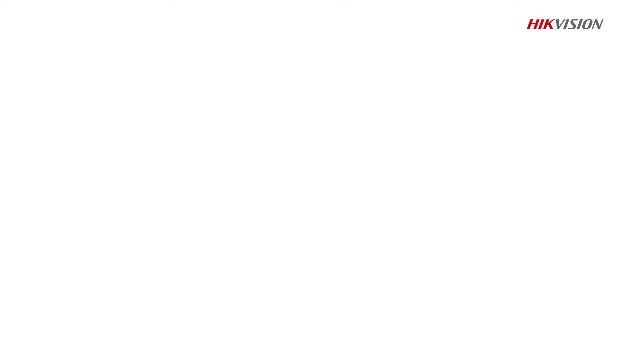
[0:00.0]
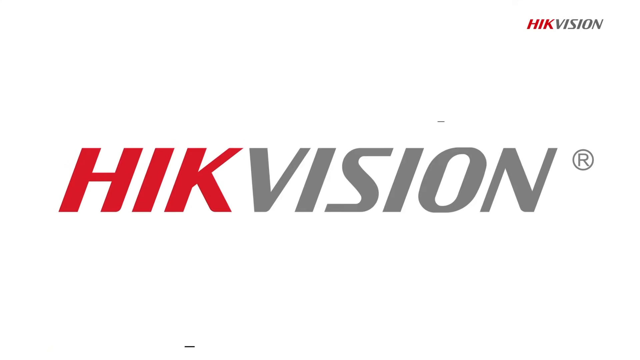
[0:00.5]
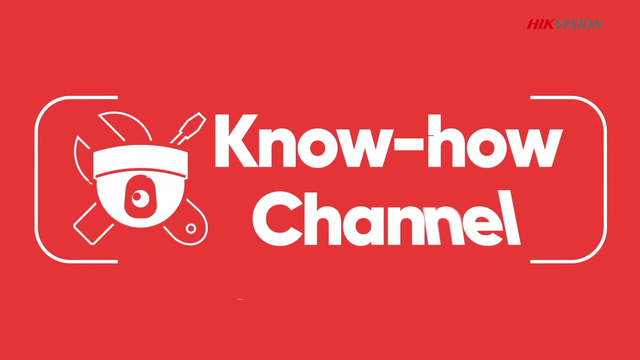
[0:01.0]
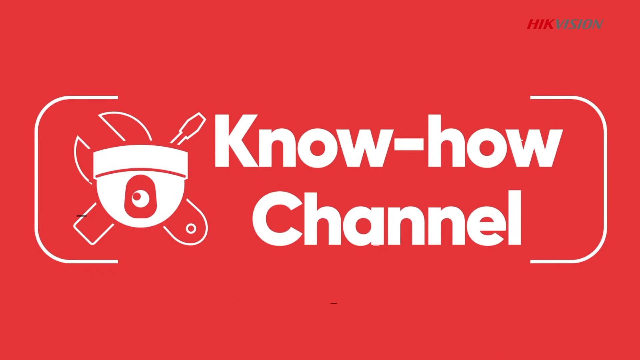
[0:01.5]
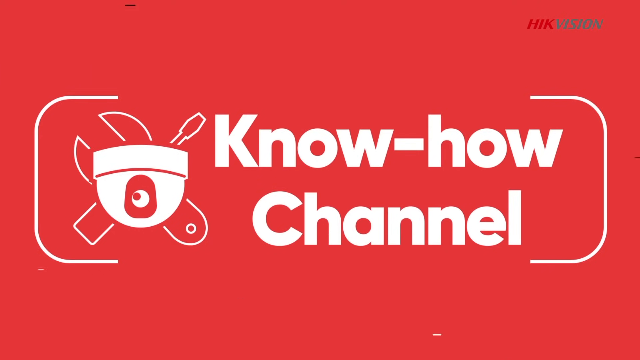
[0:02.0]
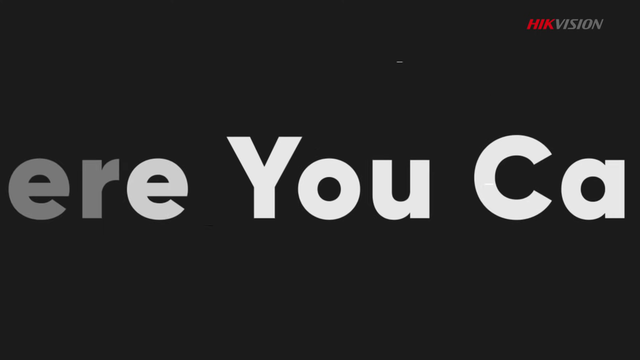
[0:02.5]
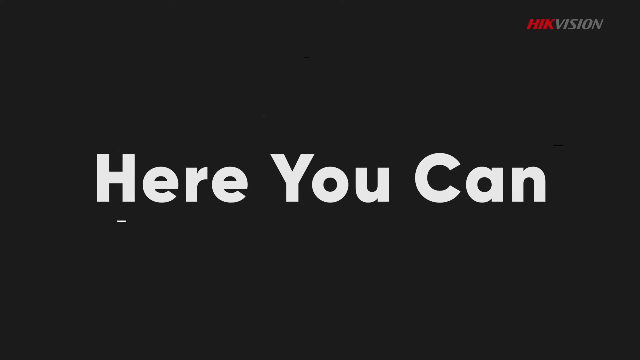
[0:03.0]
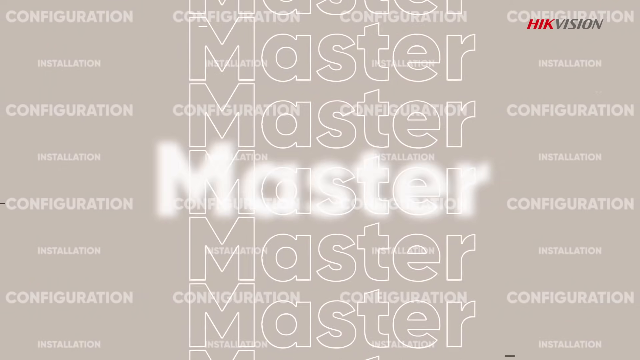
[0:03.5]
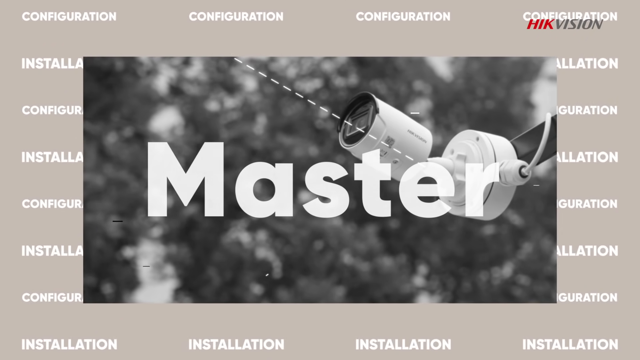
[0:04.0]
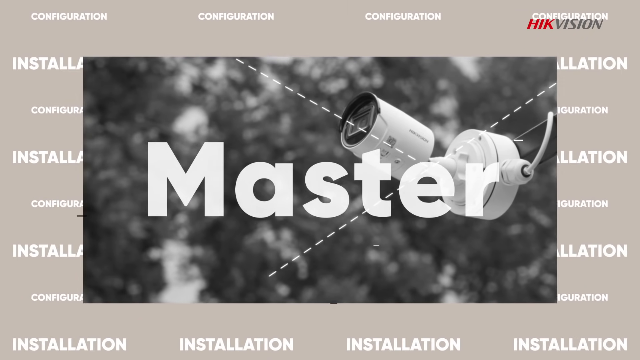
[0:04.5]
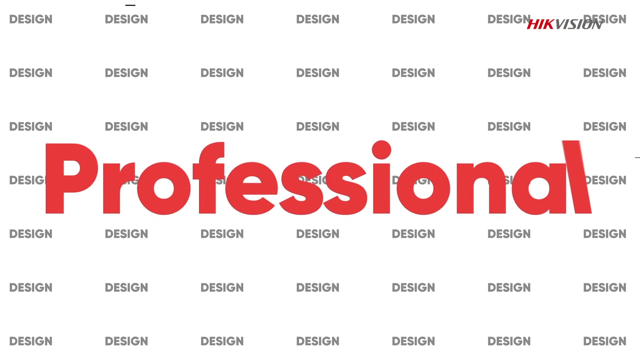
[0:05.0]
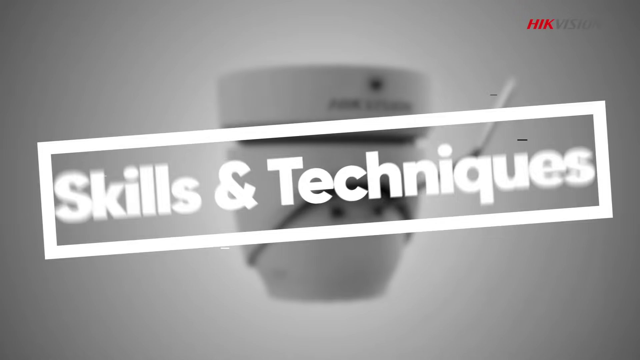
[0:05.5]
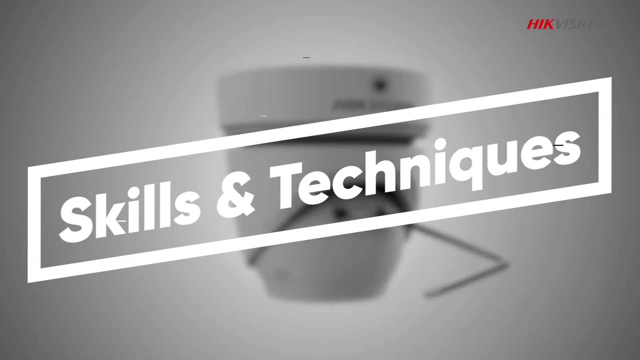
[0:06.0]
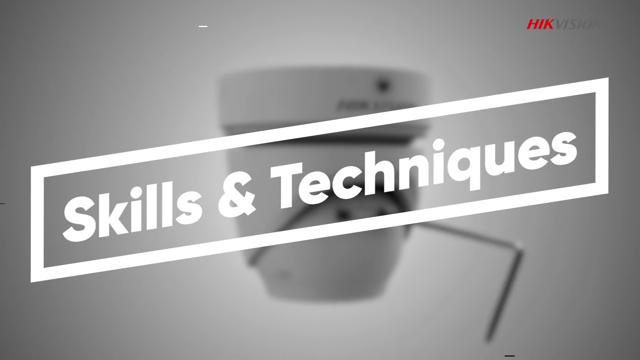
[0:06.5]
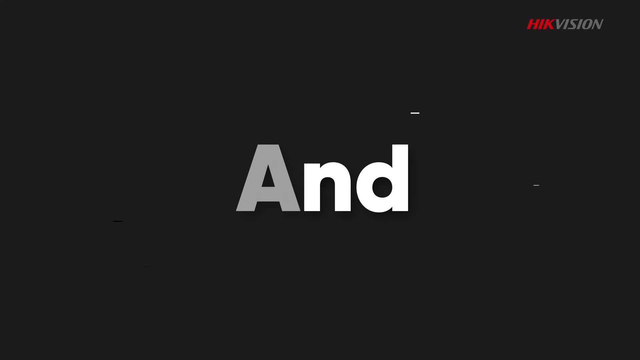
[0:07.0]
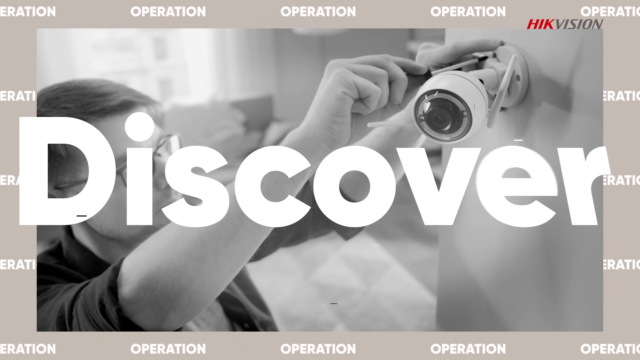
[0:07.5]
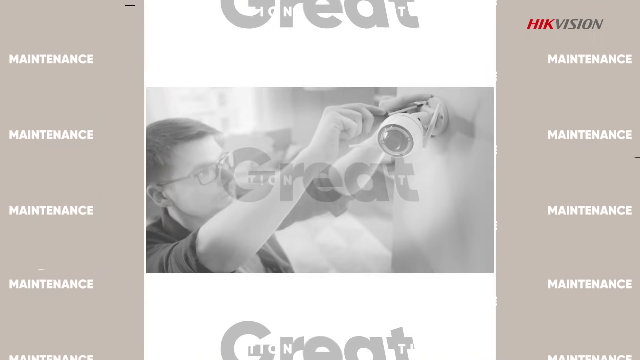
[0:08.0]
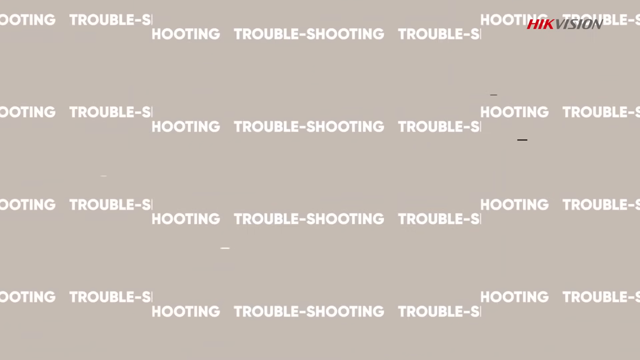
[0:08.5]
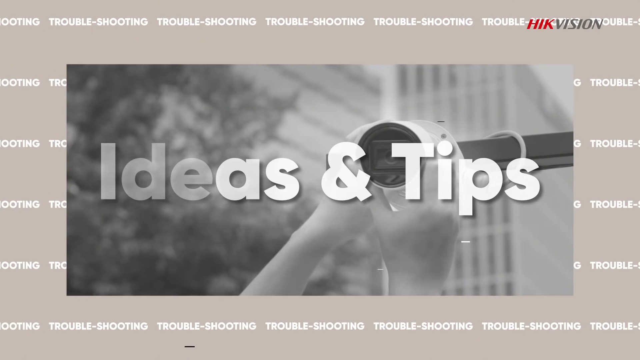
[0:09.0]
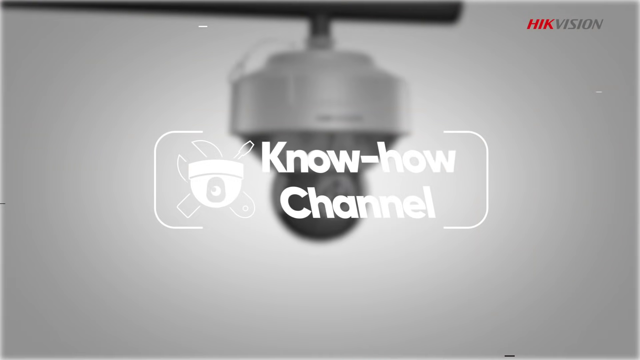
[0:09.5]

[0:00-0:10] The video opens on a channel that says "HIK Vision," and then "know-how channel," shown with what looks like a surveillance camera and some tools around it. The text continues screen by screen: "here you can," then "master," again with a security camera behind it, then "professional," "skills and techniques," and "discover great ideas and tips," followed by "know-how channel." Each of these is thrown across the screen in a different look. "Ideas and tips" is written in white over a black and white image of a person putting up a security camera, and behind that the word "troubleshooting" appears. The know-how channel text appears again, with a blurred black and white security camera in the background.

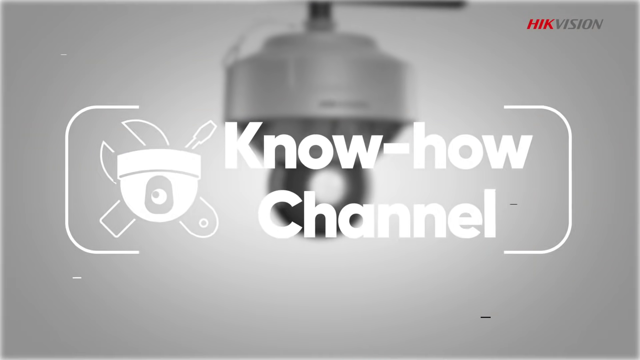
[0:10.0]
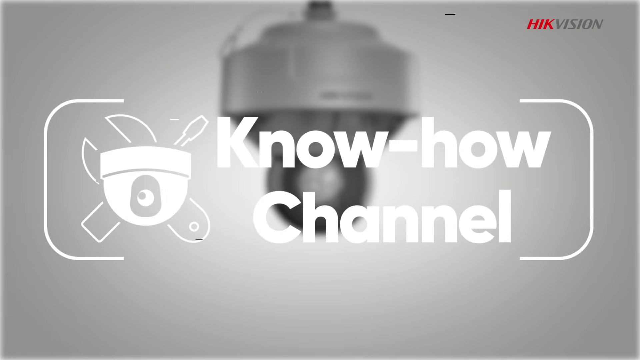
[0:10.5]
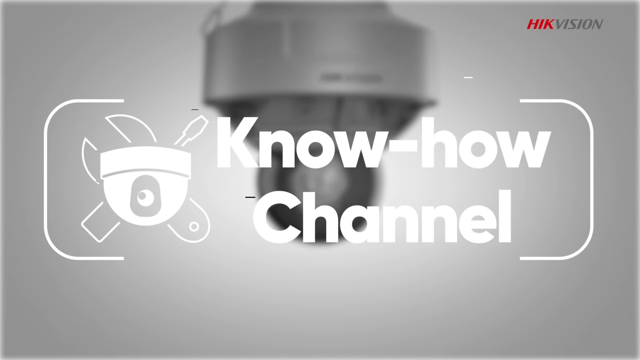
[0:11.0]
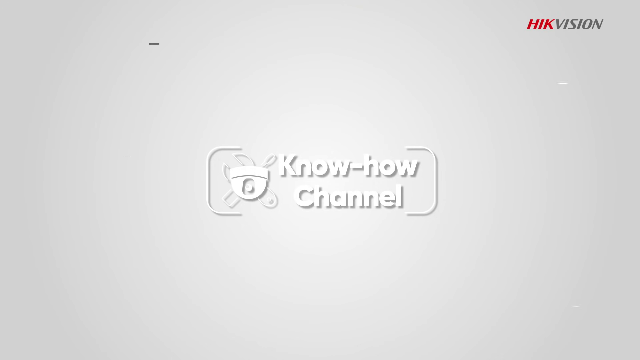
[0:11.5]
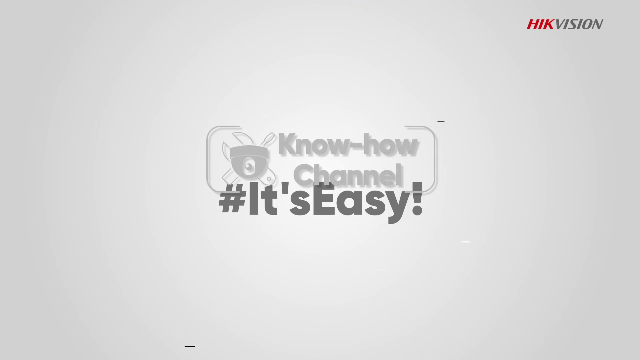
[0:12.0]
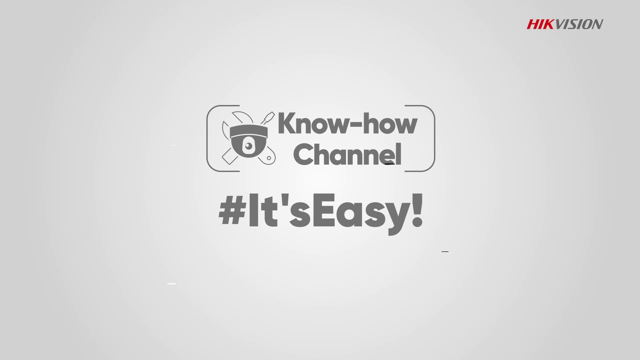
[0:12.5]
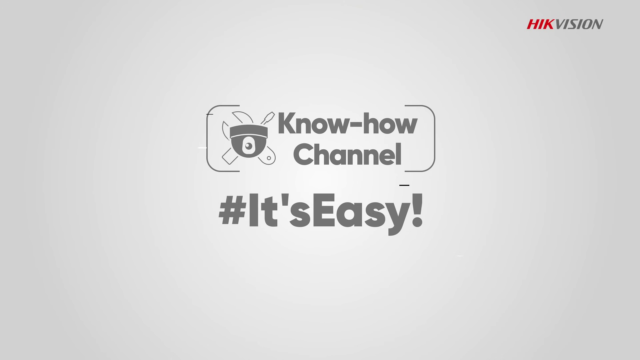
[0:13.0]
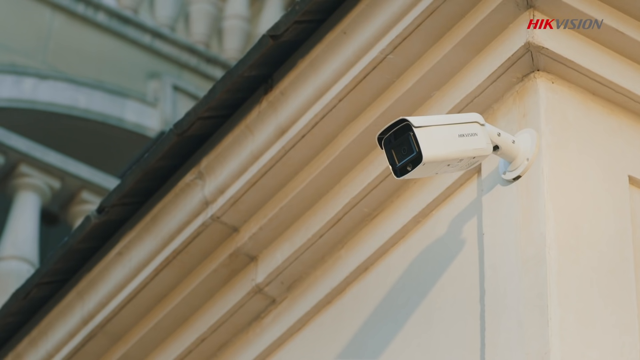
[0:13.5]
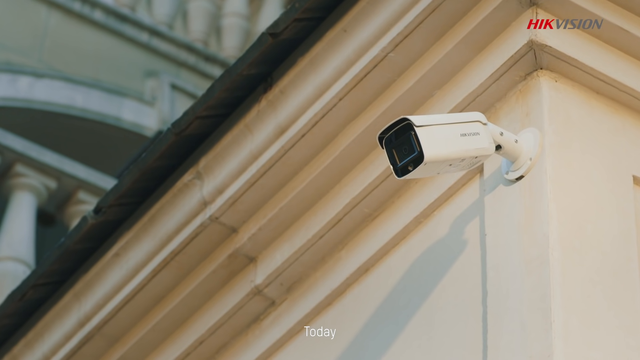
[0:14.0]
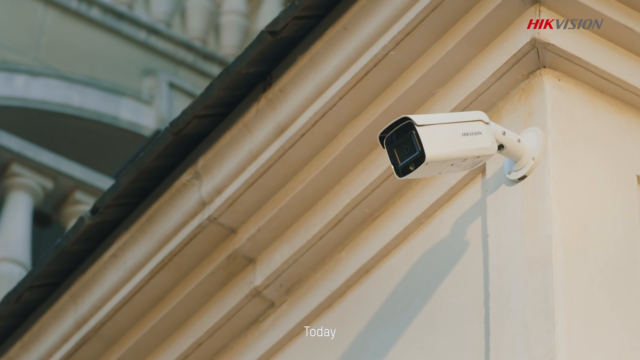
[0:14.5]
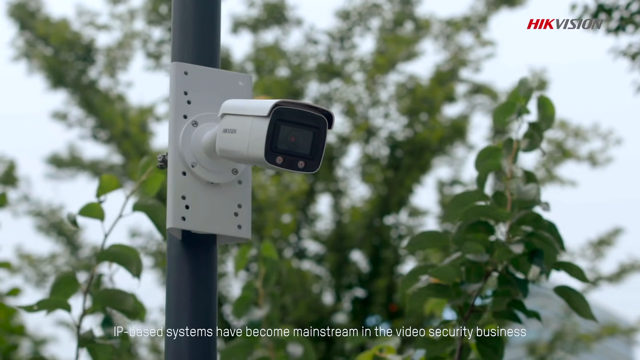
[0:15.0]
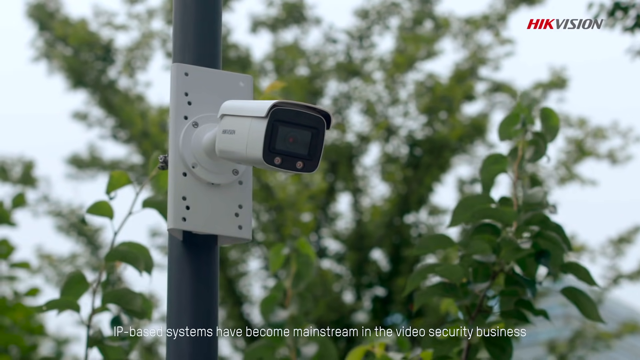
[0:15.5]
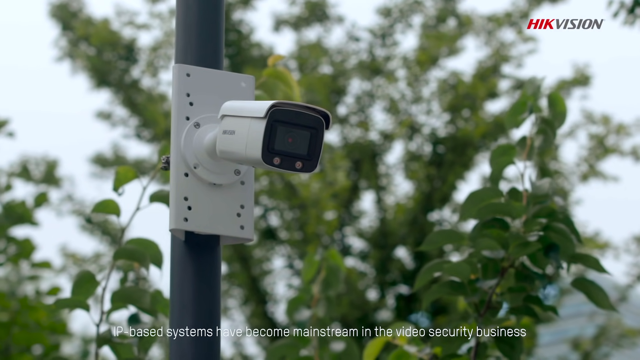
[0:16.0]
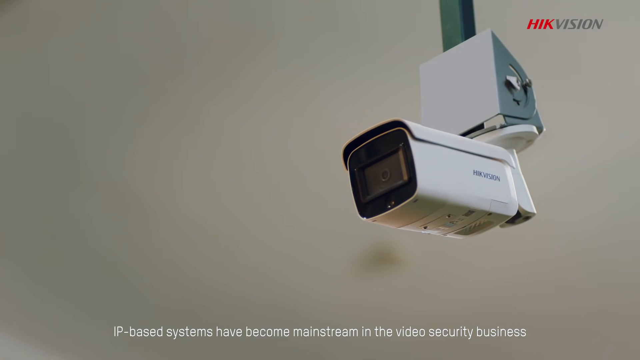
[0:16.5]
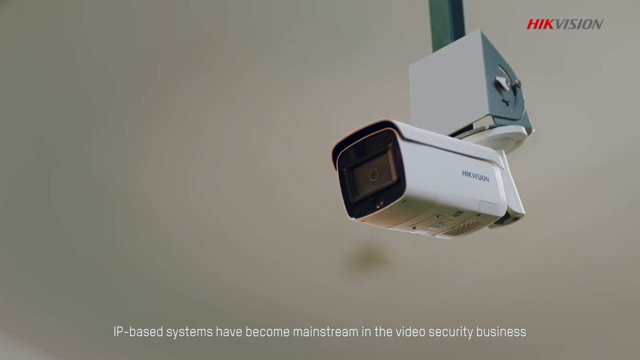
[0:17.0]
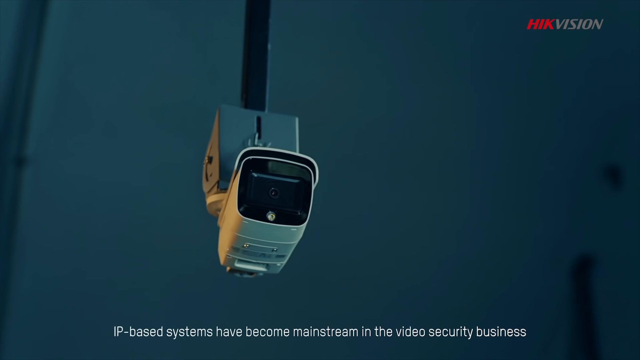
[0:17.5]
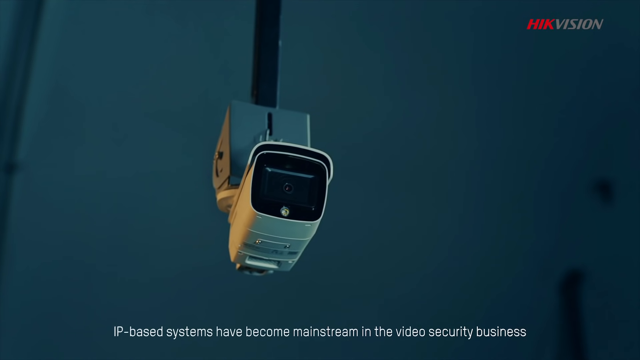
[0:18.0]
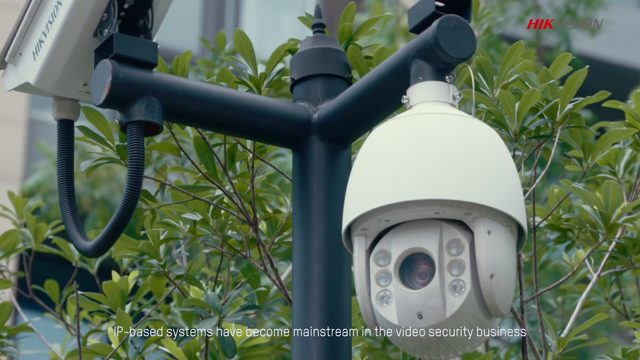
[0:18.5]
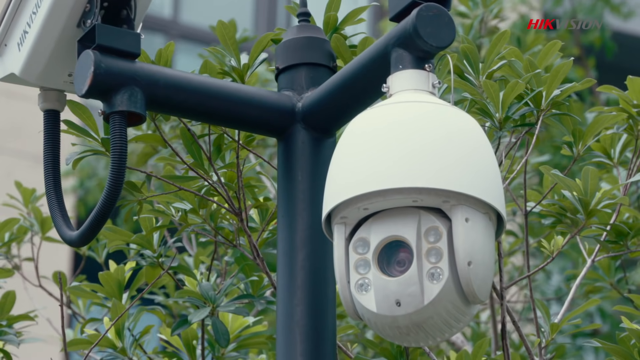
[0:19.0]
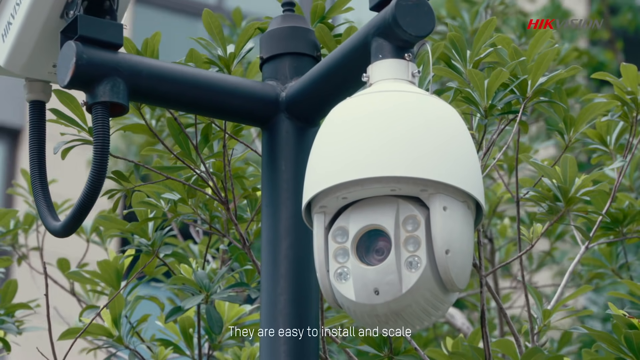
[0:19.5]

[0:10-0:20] "HIK Vision" appears in the top right-hand corner, with "HIK" in red and the rest in grey. On a grey background, a dark grey "know-how channel" appears with the logo, and underneath it says "#it's easy!" A security camera is shown up against a wall at a corner, on the left side of the corner wall and angled left, with the eaves, the roof, and a building beyond in the background. Another very square security camera appears to be mounted high on a pole near the tops of some fruit trees. Another square security camera seems to be mounted from something hanging above, apparently indoors, possibly in a warehouse or building, hanging from a pole attached above. Then a different type of security camera, a more egg-shaped, circular one, hangs from a pole with trees and bushes in the background. Then a person appears.